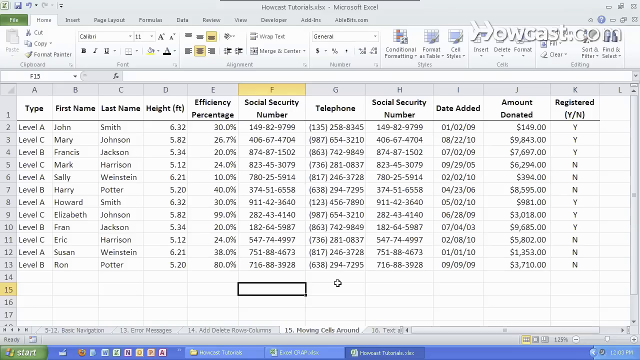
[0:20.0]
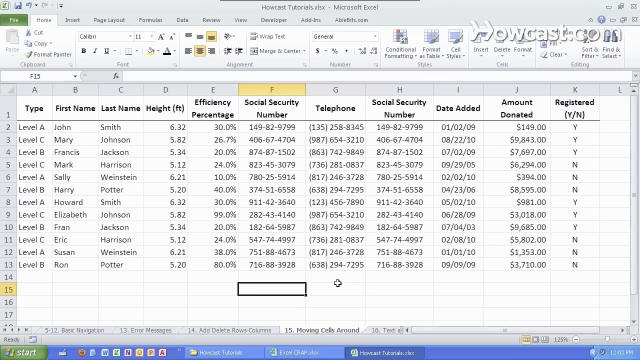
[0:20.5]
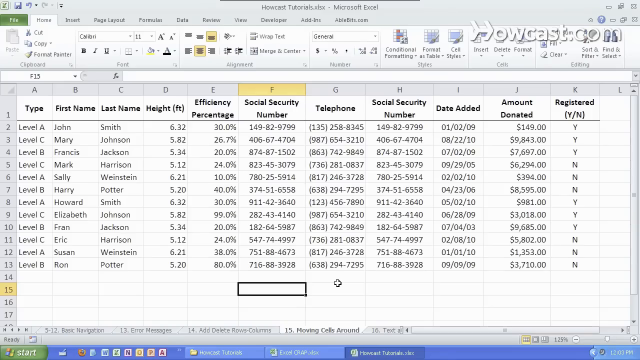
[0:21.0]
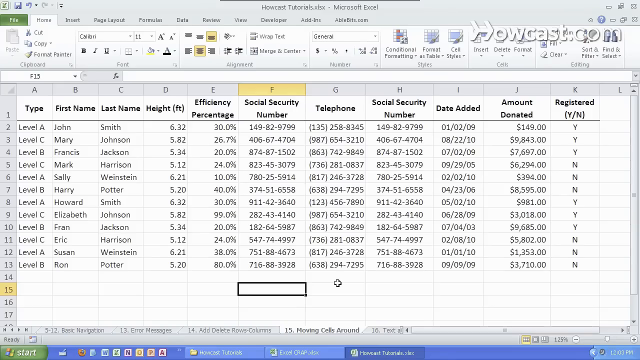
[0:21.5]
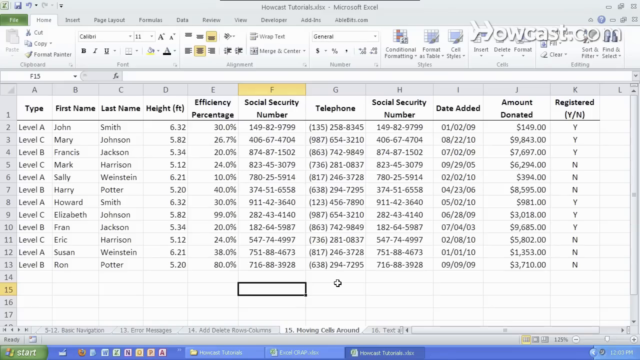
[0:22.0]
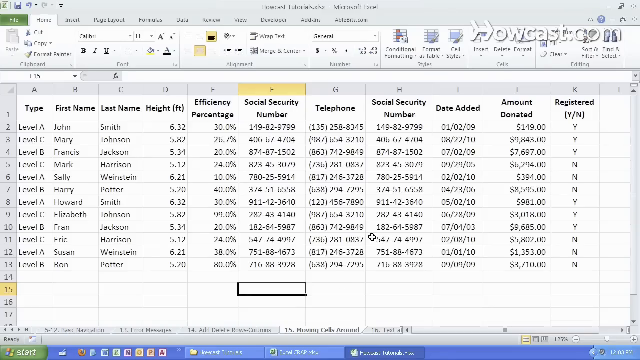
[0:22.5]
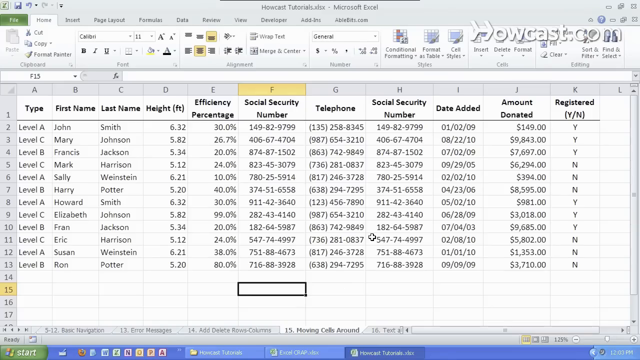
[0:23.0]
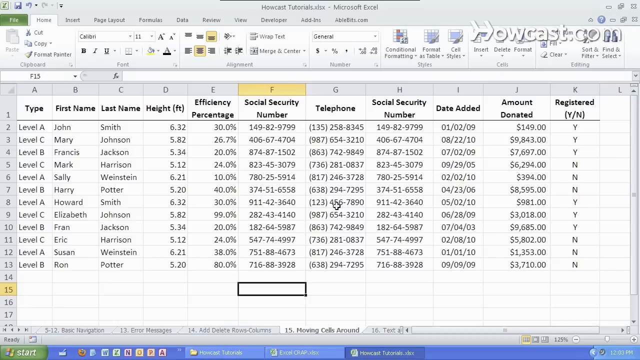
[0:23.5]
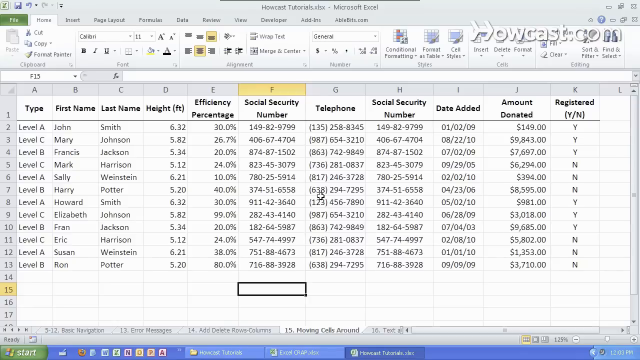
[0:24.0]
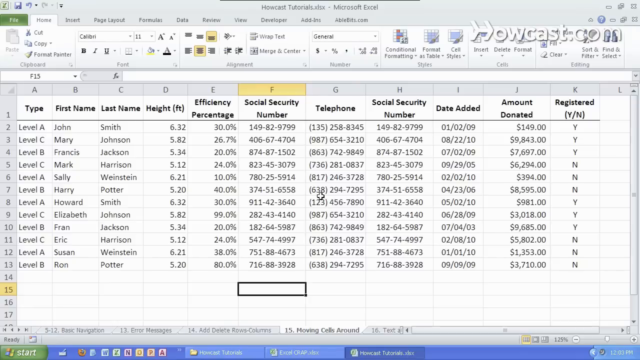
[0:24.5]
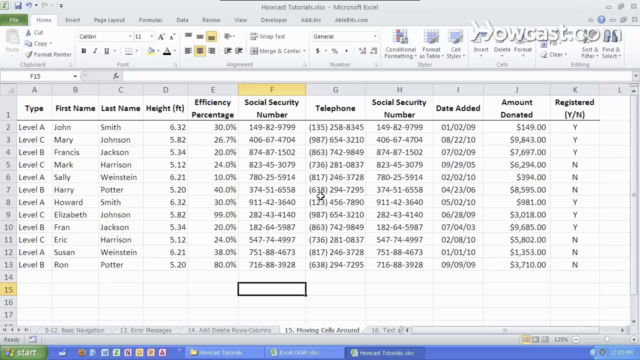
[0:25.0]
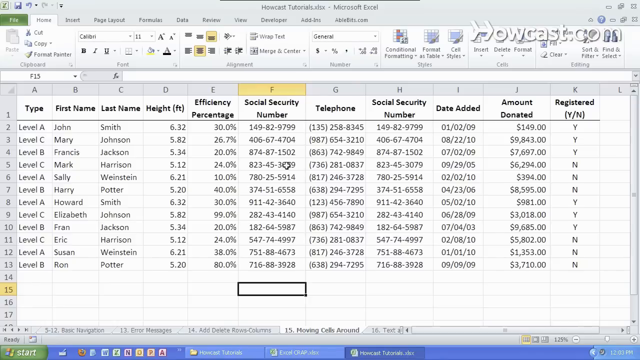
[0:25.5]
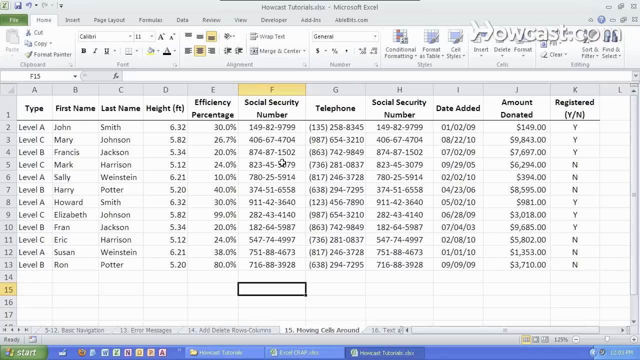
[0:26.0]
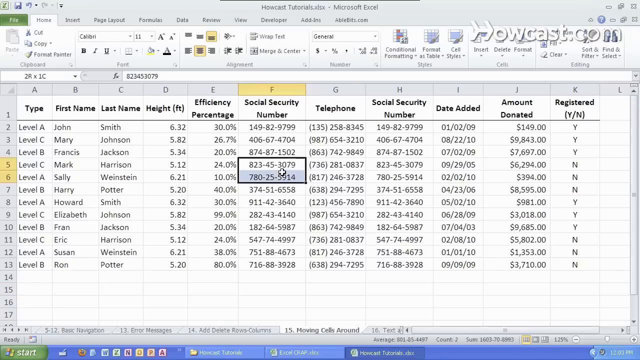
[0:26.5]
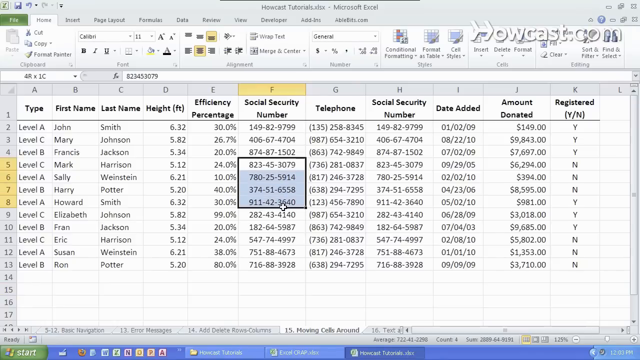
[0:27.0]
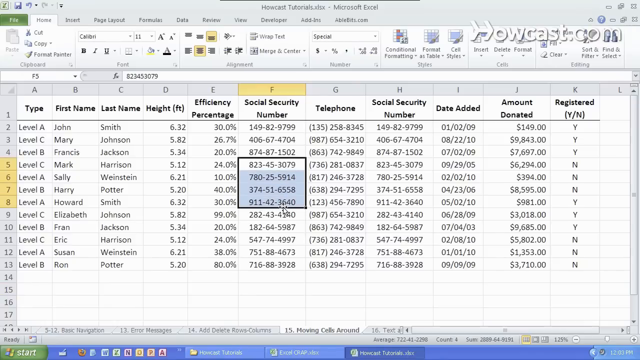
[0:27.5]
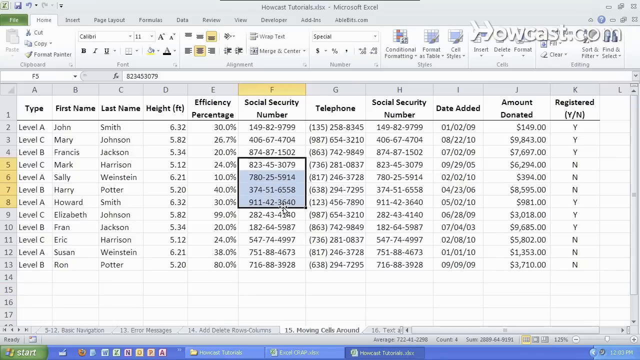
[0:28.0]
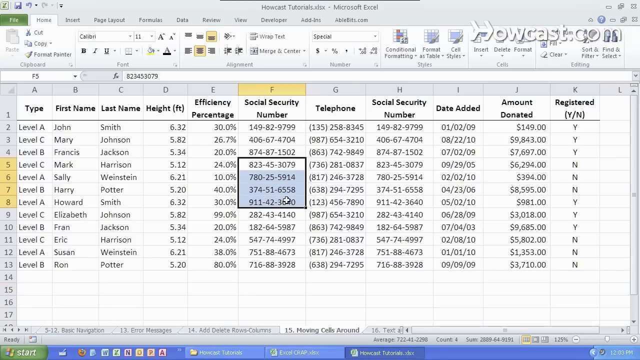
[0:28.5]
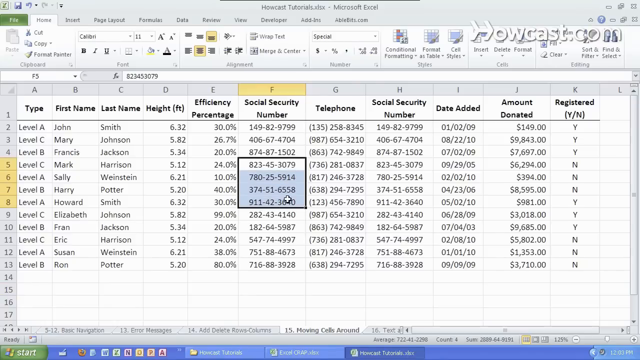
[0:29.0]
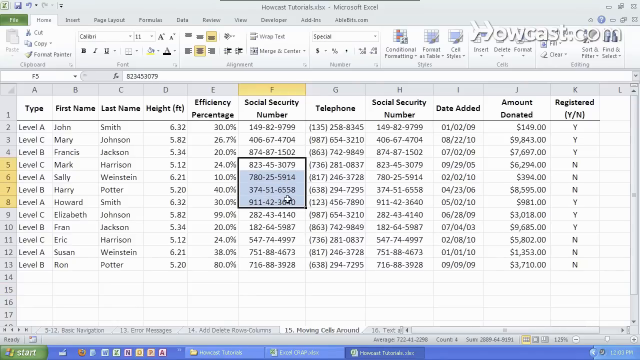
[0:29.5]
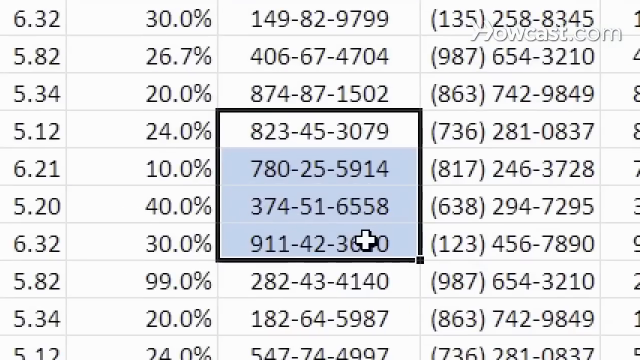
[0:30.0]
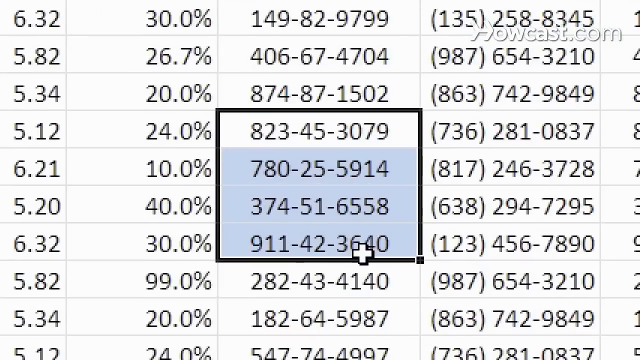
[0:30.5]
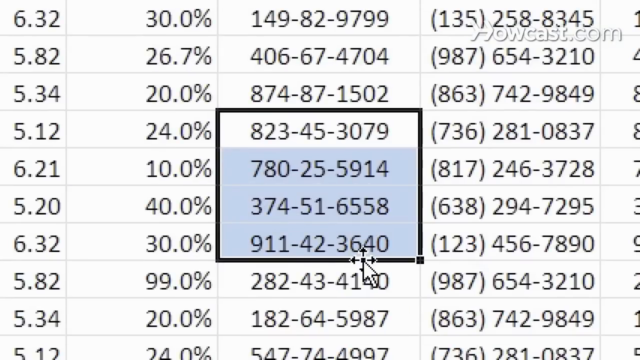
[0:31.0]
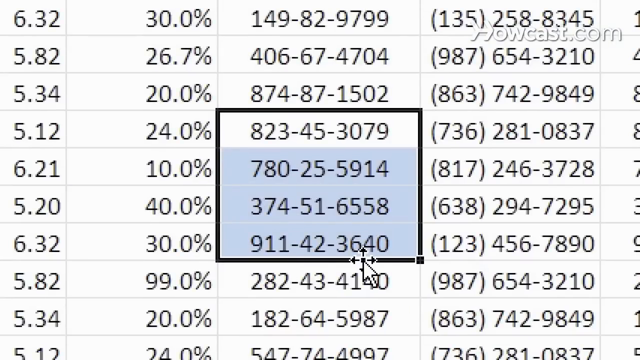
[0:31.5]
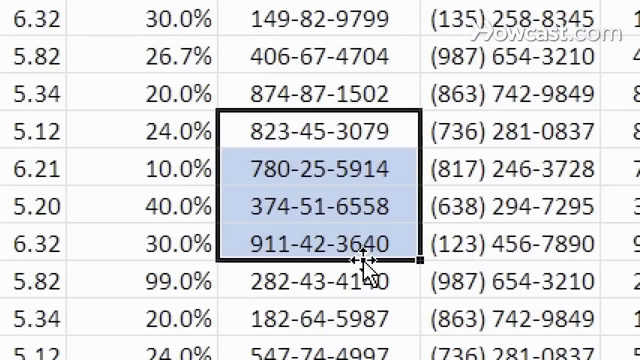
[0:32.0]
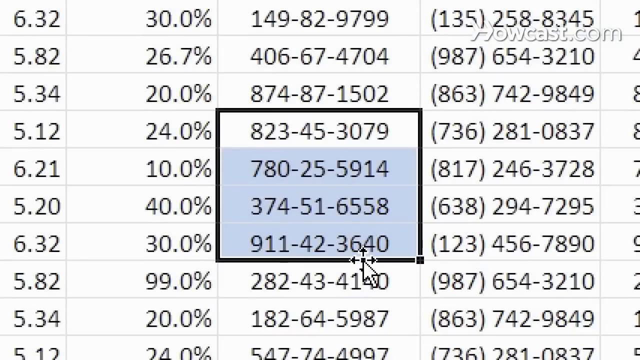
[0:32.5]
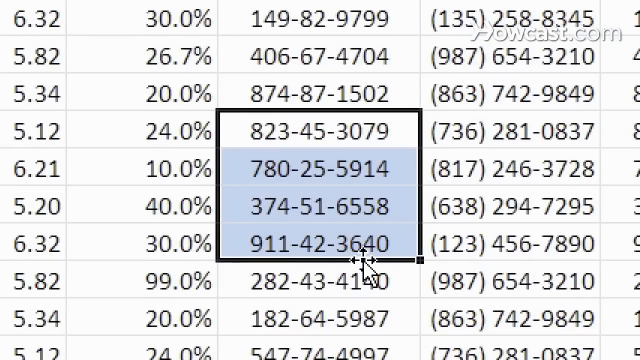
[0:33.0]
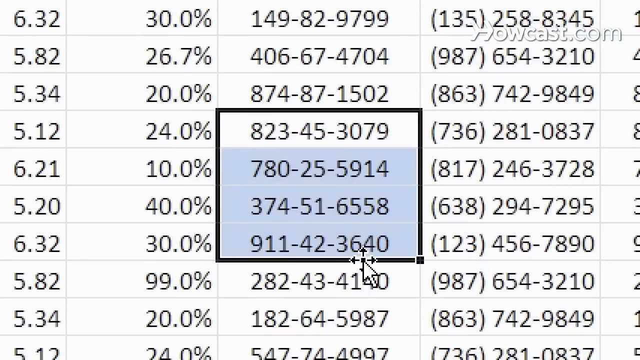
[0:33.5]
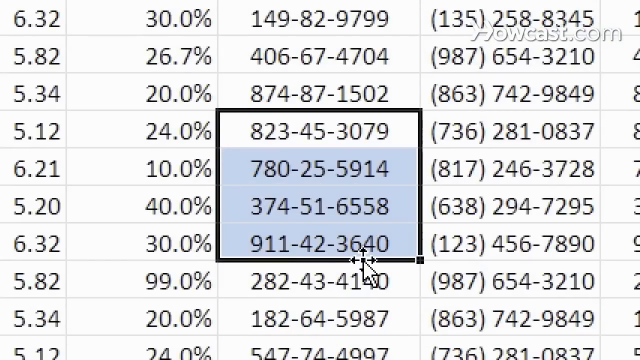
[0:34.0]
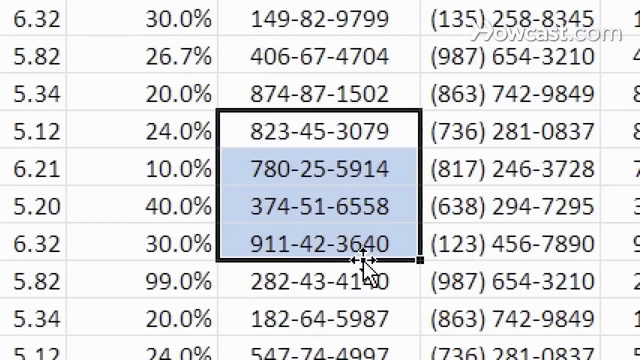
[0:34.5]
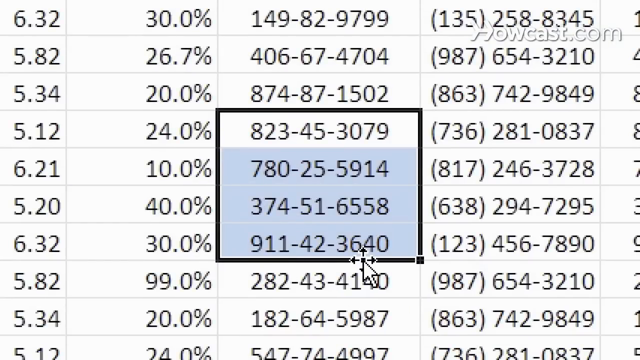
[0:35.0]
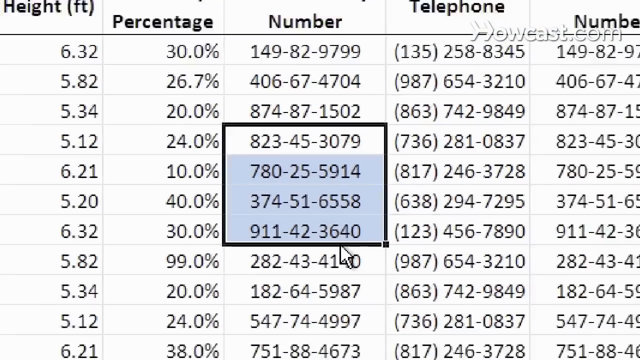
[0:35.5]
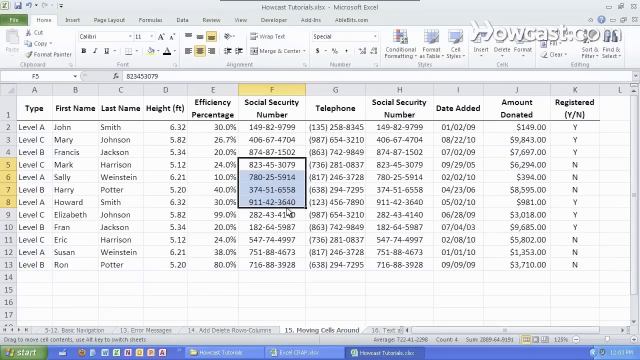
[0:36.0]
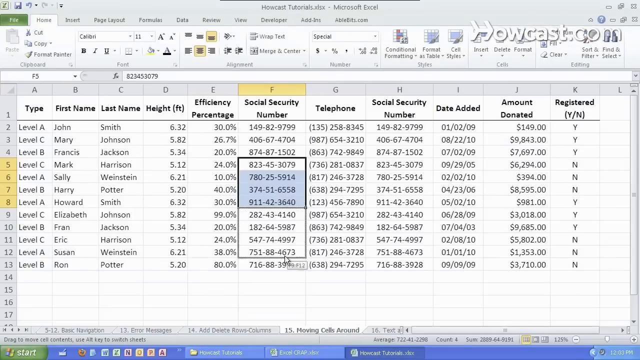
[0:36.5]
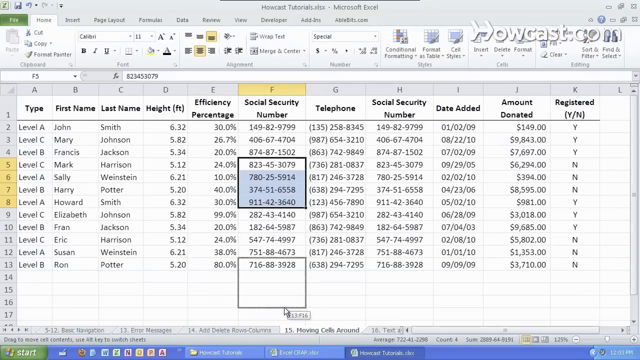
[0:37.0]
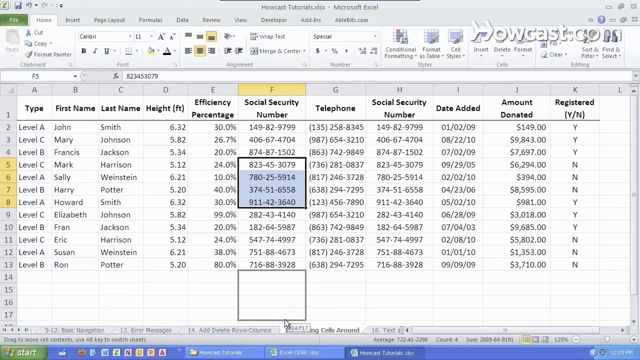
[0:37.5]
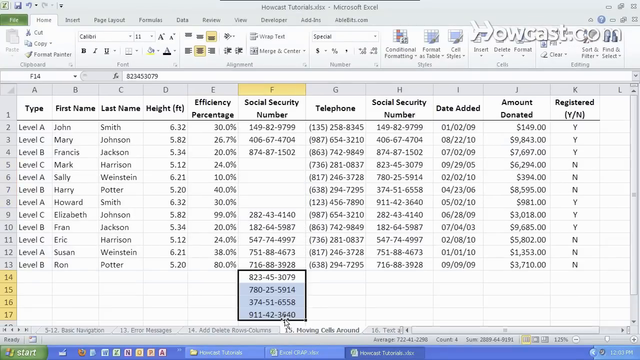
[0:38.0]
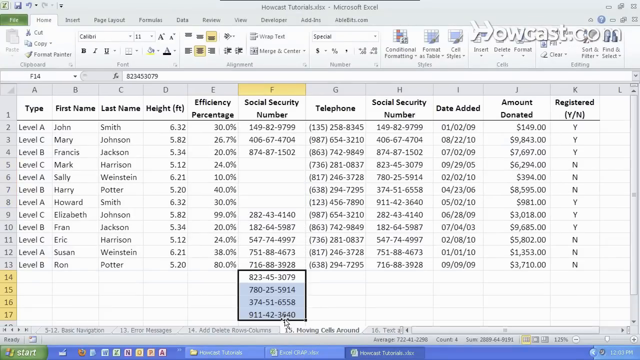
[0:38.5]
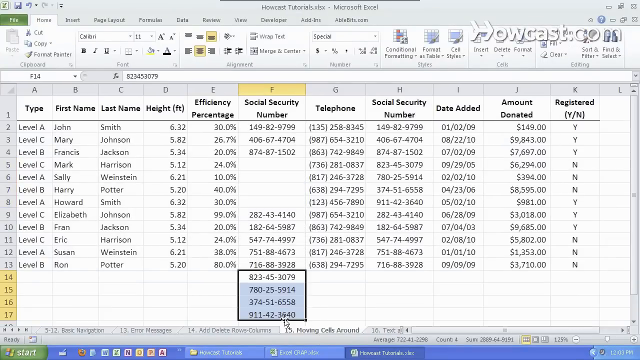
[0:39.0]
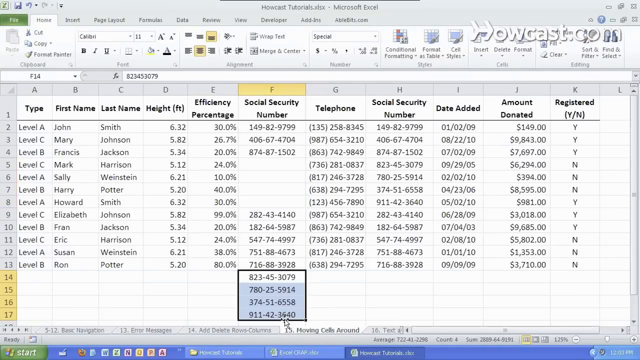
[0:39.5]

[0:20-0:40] The Excel spreadsheet continues on screen. The man hovers over the social security numbers as the camera zooms in. He highlights four cells and moves them down. The camera zooms into the four cells in the middle; he highlights and drags them, the camera zooms out, and he drops them into a different cell right underneath the social security numbers, four cells below. A Howcast.com logo is in the top right corner and stays there for the rest of the video.